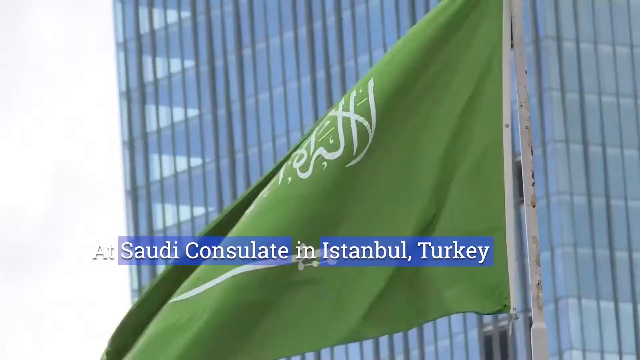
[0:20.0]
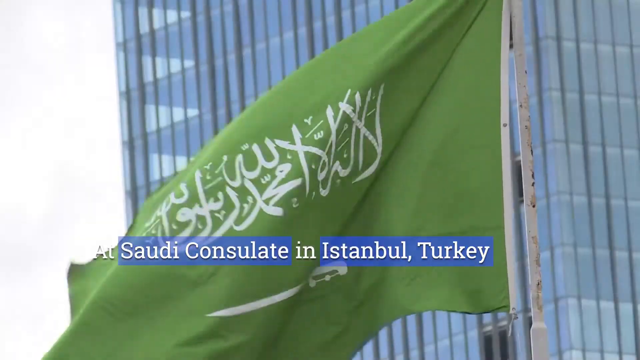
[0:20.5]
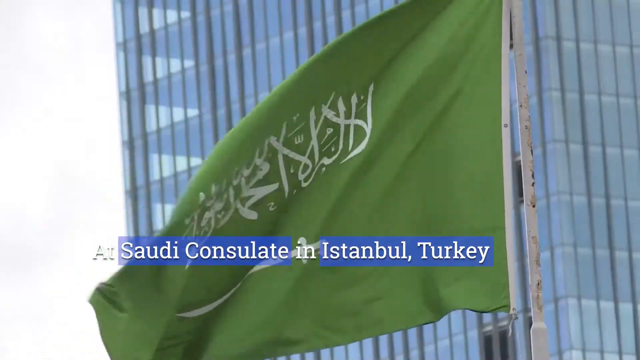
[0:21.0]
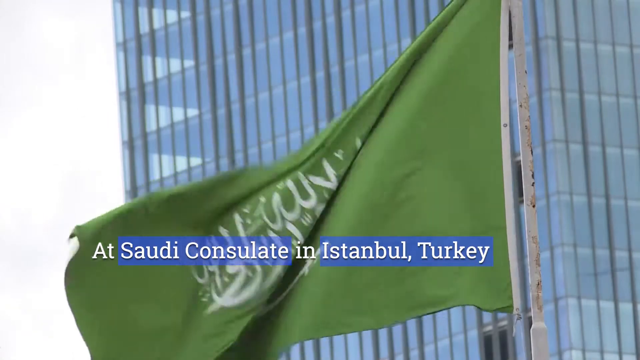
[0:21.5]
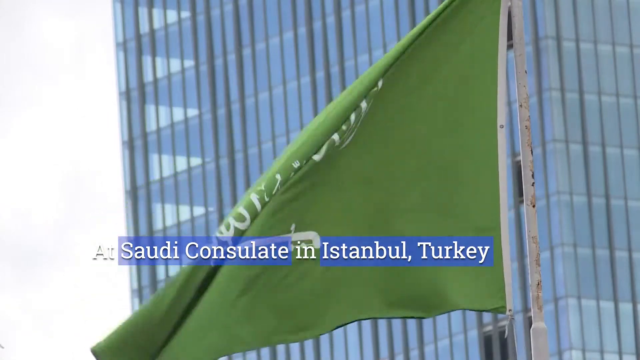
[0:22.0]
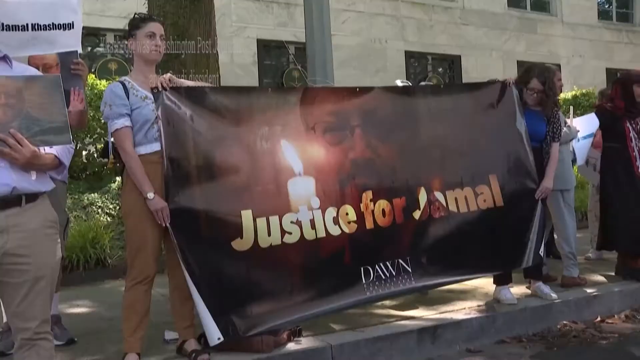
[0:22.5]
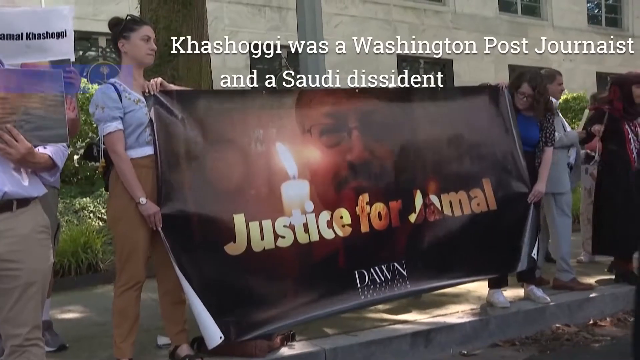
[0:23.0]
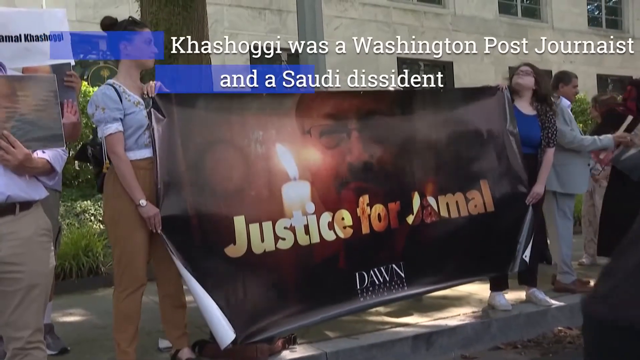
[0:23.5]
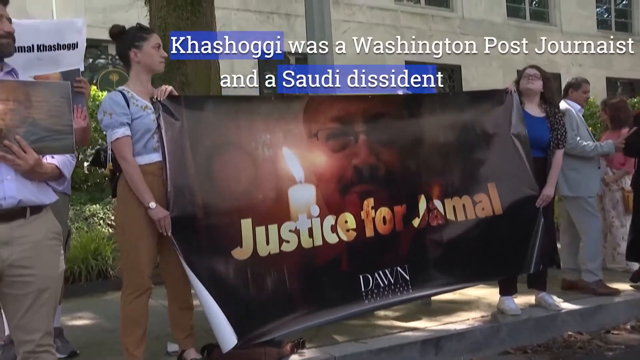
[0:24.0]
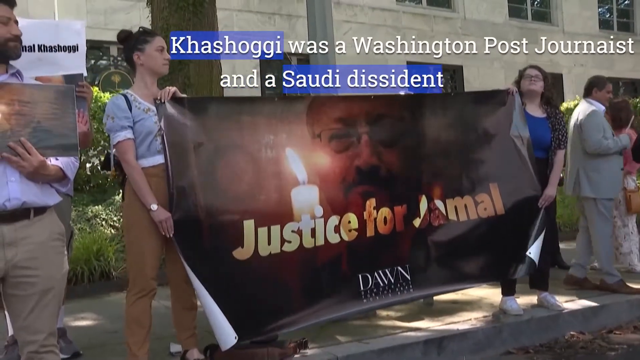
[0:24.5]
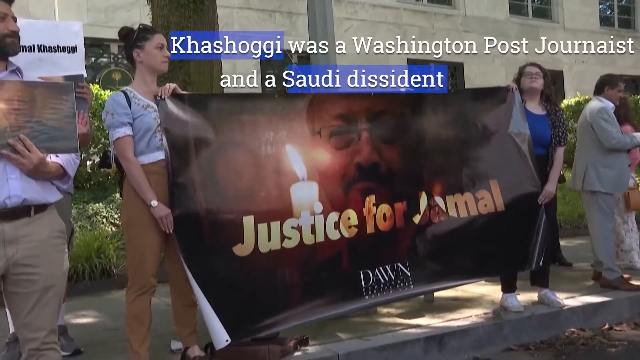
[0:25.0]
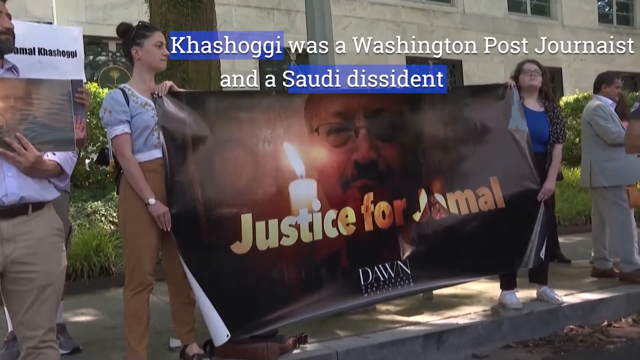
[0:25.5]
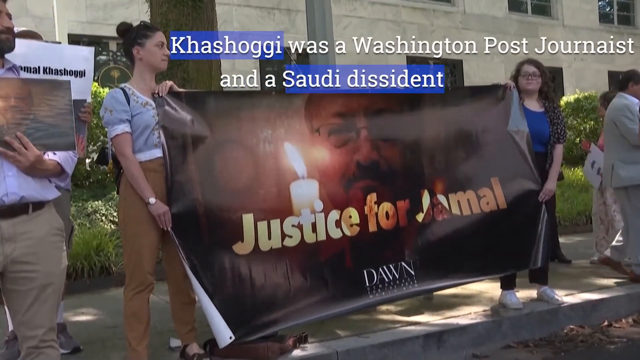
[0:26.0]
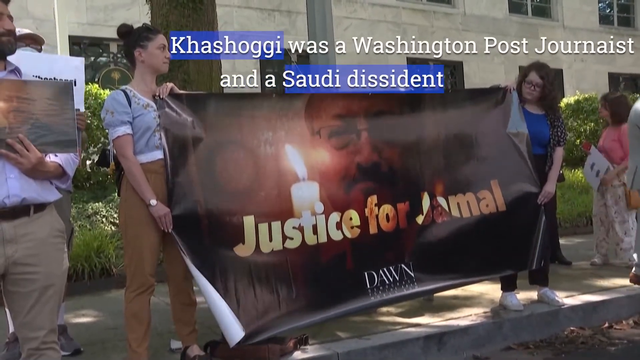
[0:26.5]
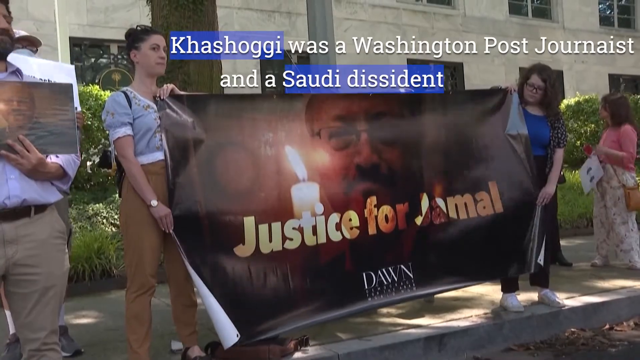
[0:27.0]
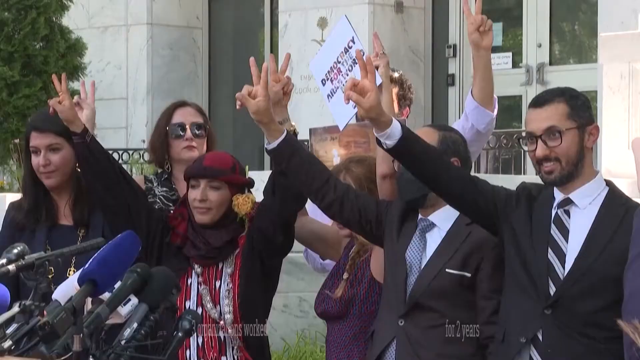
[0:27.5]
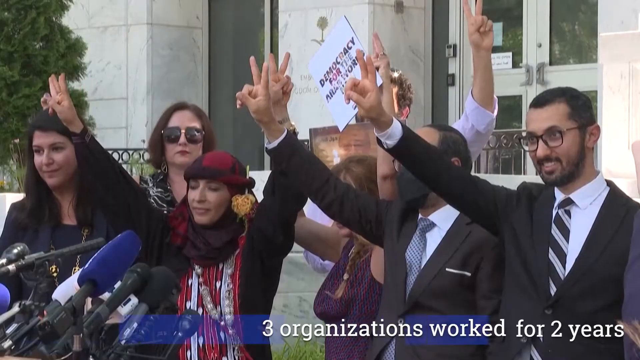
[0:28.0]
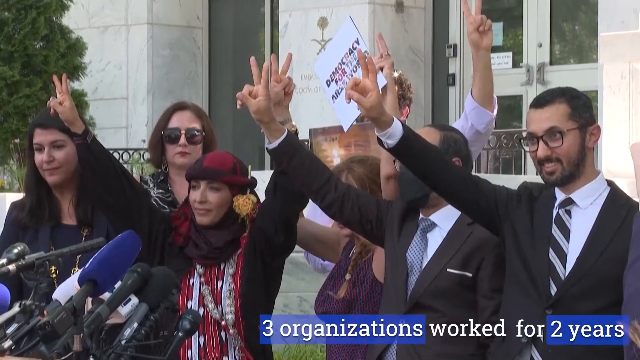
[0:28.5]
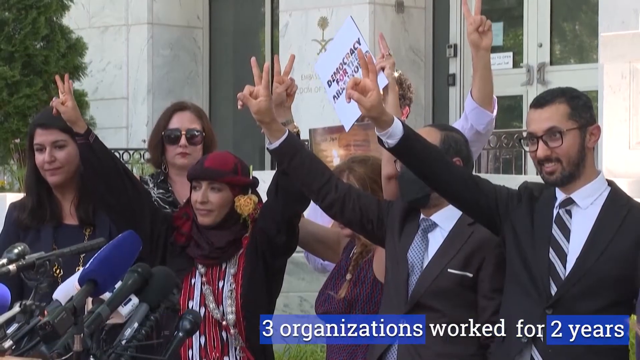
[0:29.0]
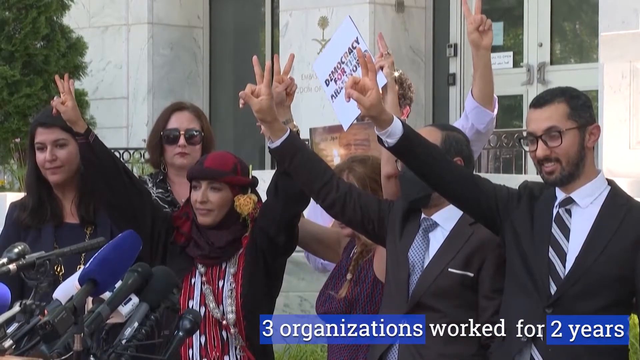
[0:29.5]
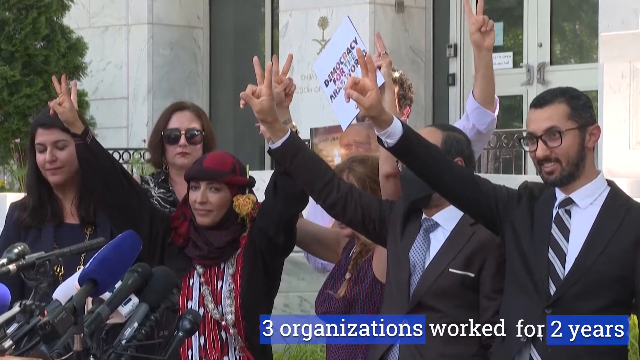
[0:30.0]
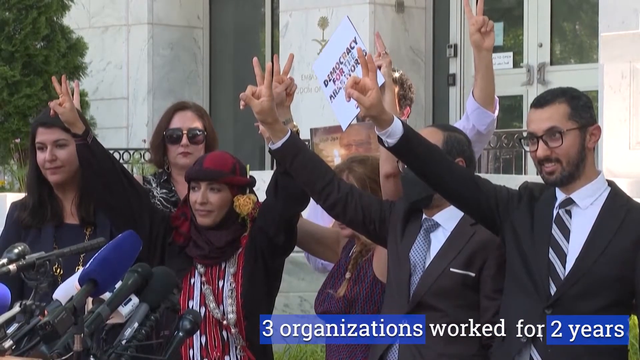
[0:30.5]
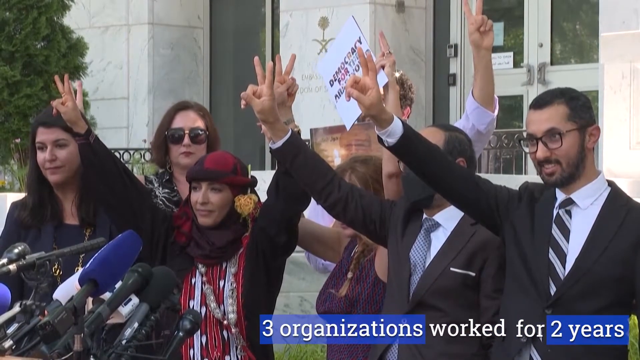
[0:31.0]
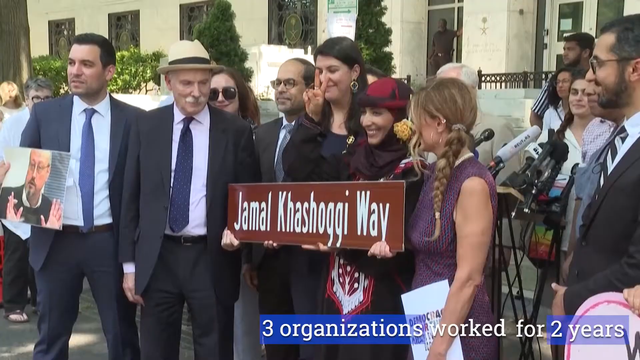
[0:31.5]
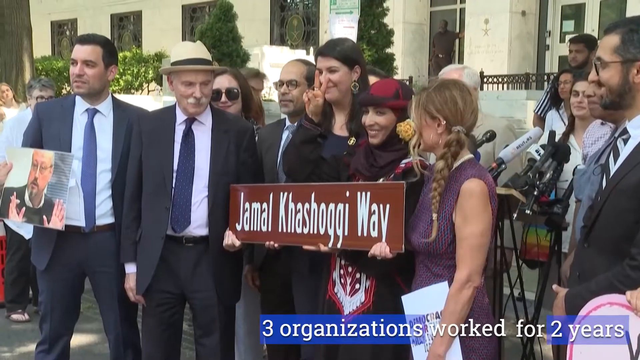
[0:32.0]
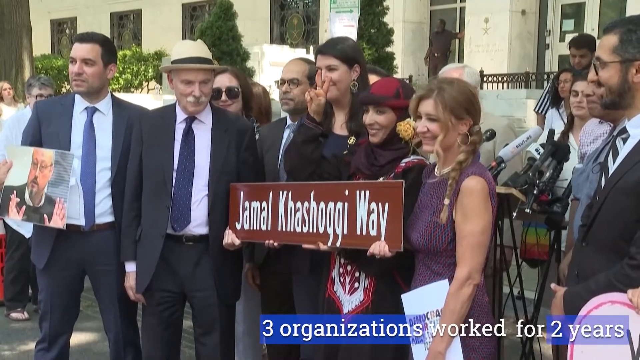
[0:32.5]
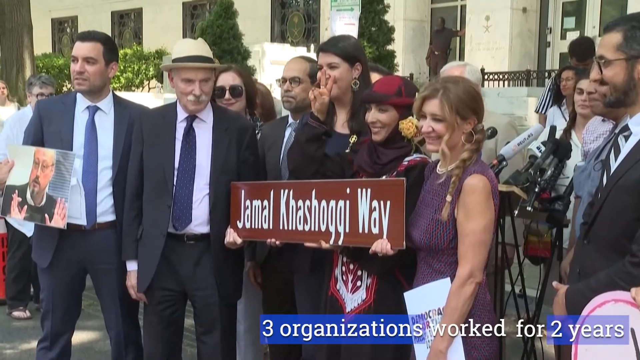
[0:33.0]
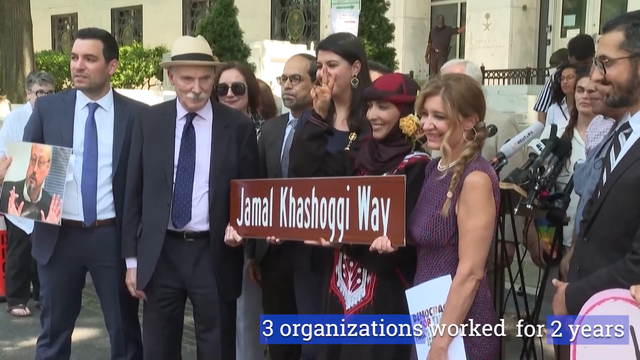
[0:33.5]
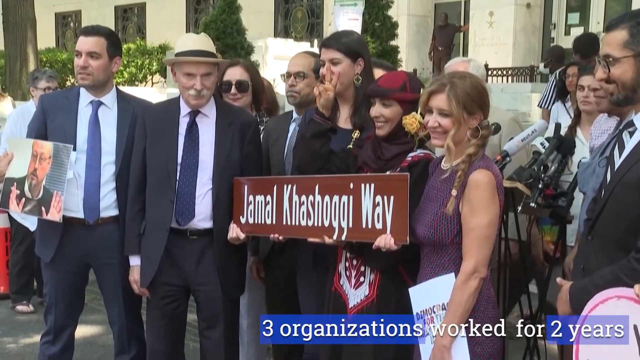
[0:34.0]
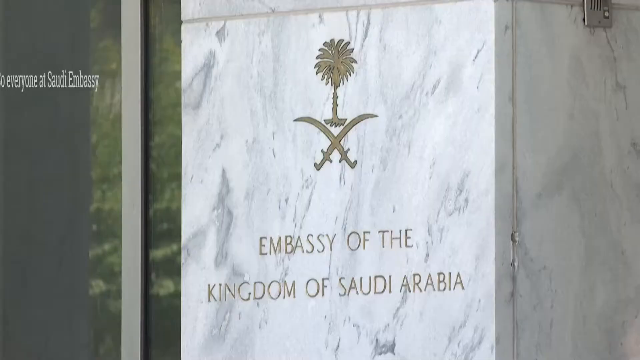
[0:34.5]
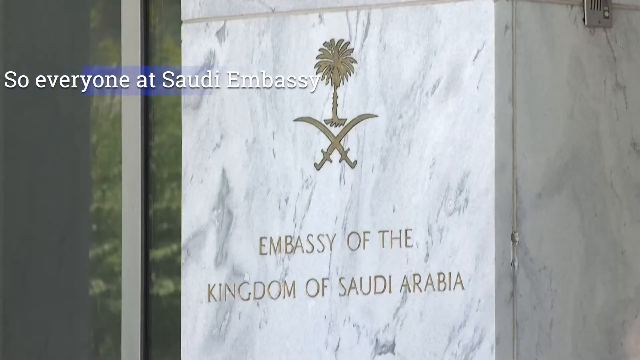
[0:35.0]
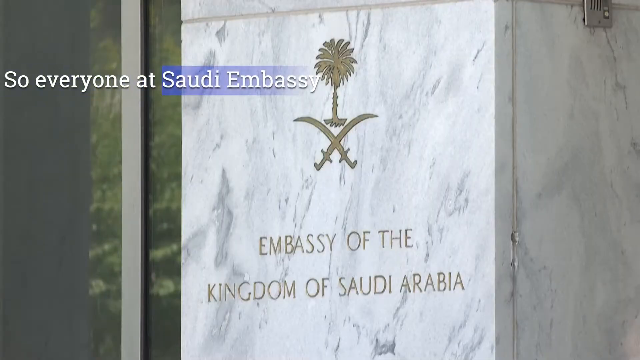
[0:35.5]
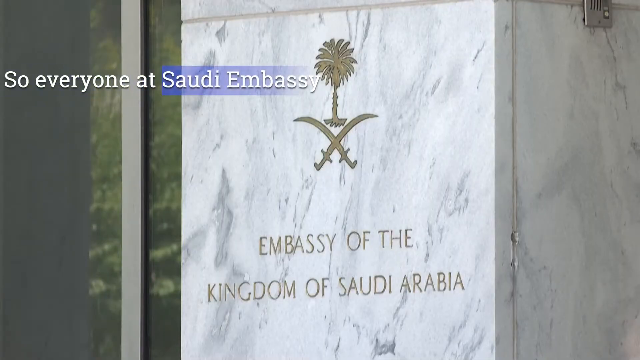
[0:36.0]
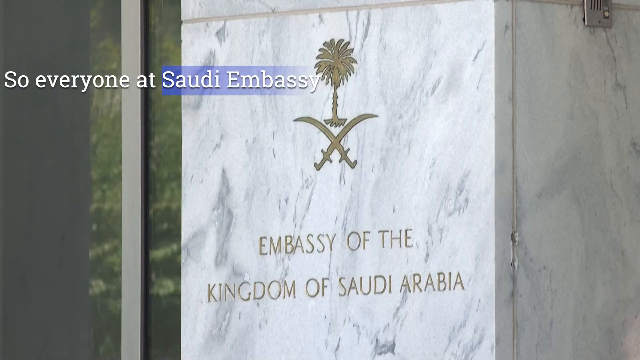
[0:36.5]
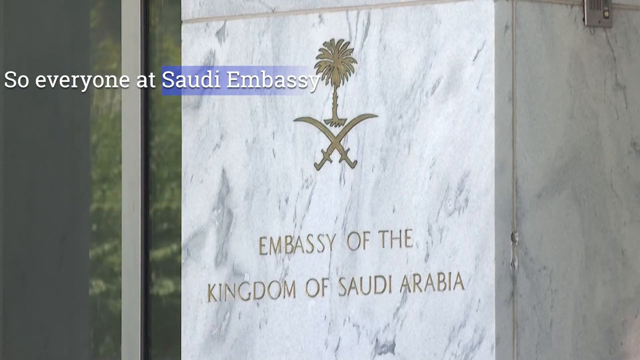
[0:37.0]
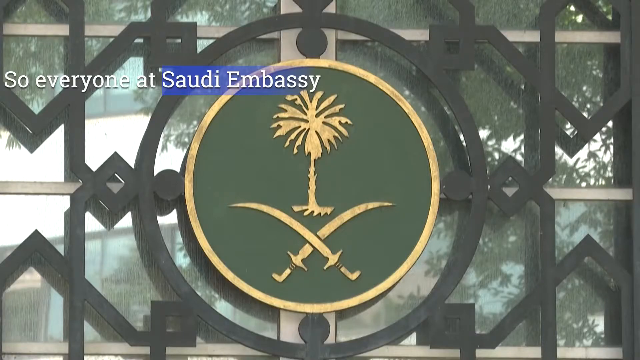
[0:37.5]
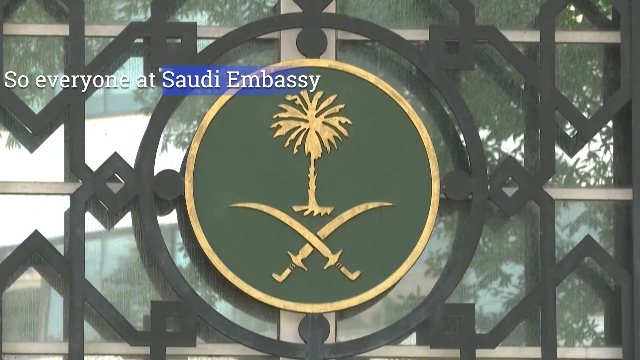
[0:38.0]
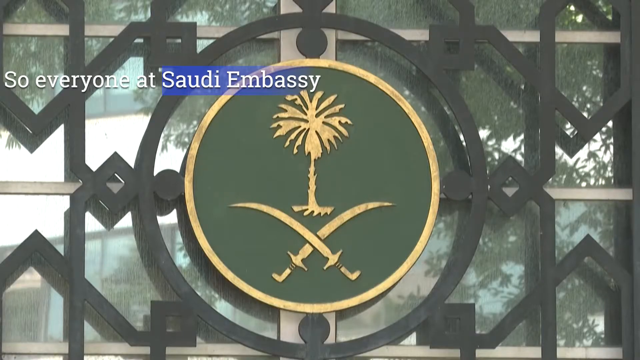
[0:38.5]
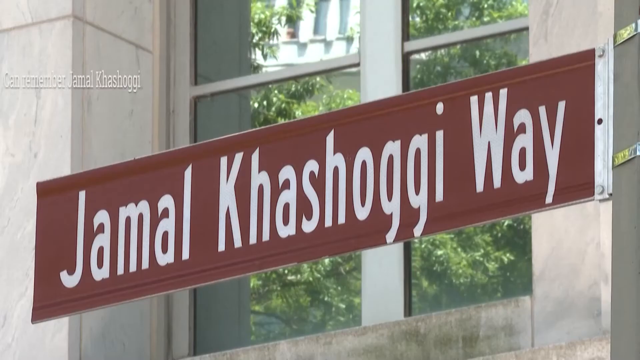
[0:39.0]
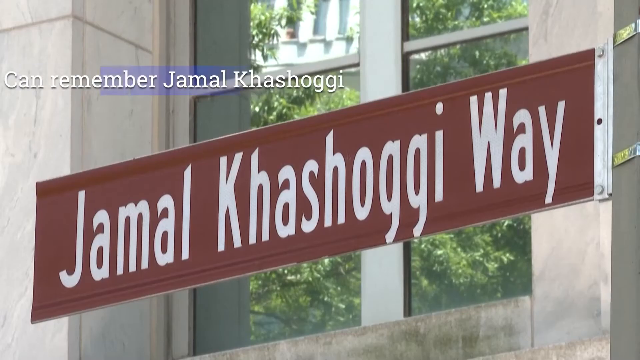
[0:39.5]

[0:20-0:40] A large green flag, the flag of Turkey, appears, with a caption placing the scene at the Saudi consulate in Istanbul, Turkey. Behind the flag is a large glass building, and the flag moves to the left, apparently in a stiff wind. This is also a protest about Jamal Khashoggi. Two young women hold a large sign, about four feet high and eight feet wide, showing a picture of Jamal with a candle in front of him, the words "Justice for Jamal", and the word "Dawn" at the bottom. Other protesters hold up signs demanding justice for Jamal. The video cuts to other people, some in traditional Turkish clothing and some in Western business clothing, all holding up V-for-victory signs; a sign in the back seems to advocate for democracy rather than autocracy.